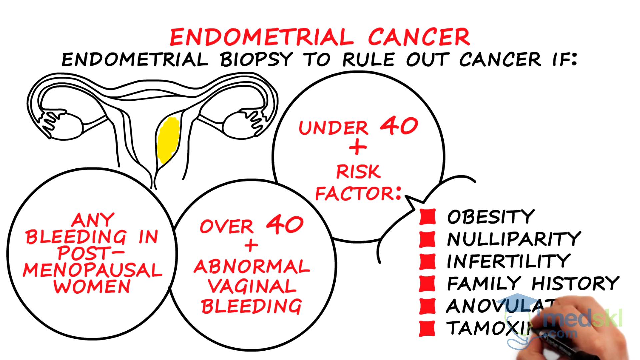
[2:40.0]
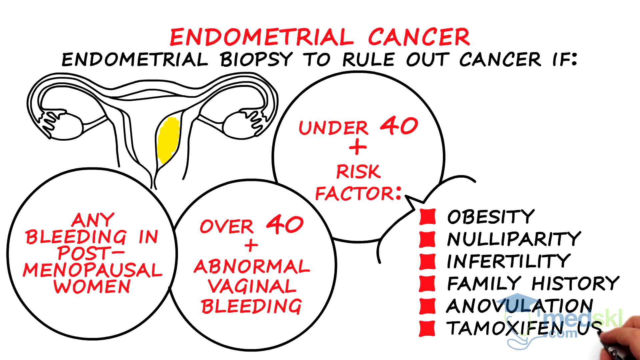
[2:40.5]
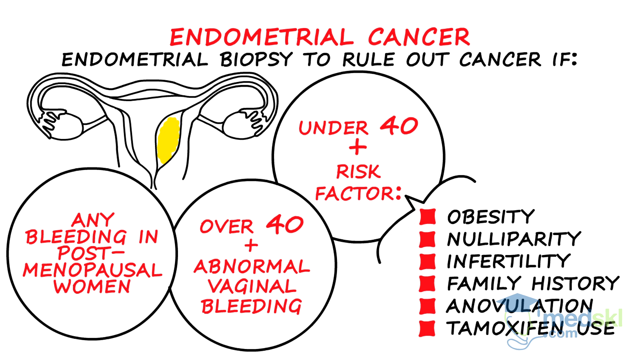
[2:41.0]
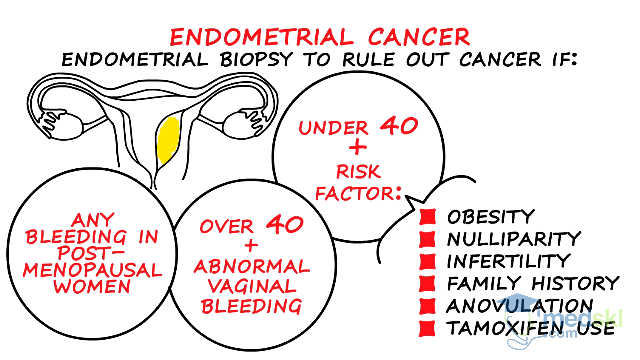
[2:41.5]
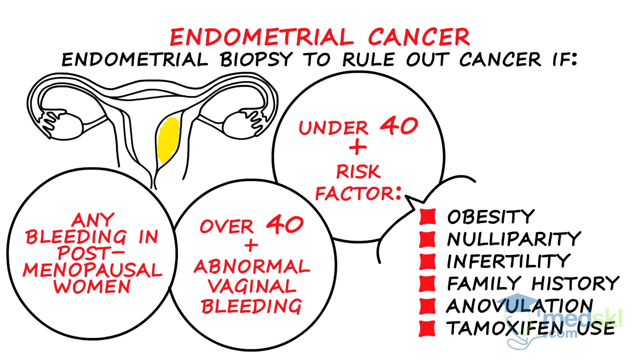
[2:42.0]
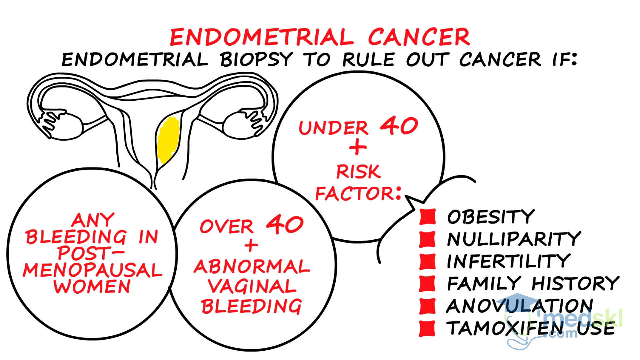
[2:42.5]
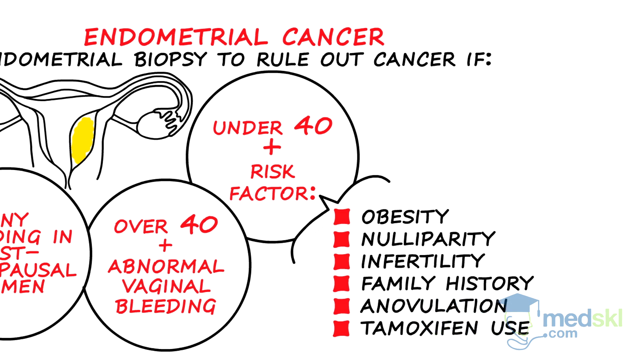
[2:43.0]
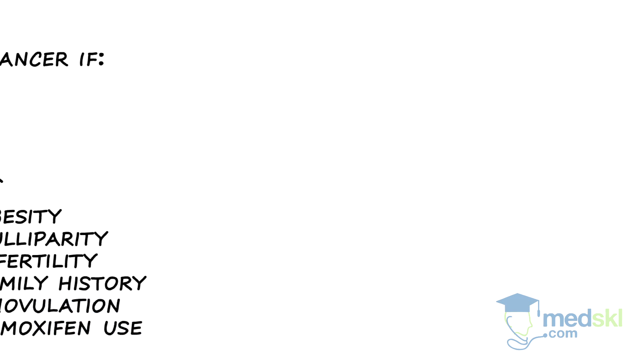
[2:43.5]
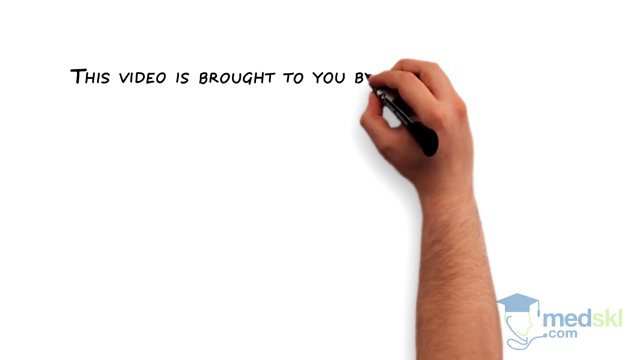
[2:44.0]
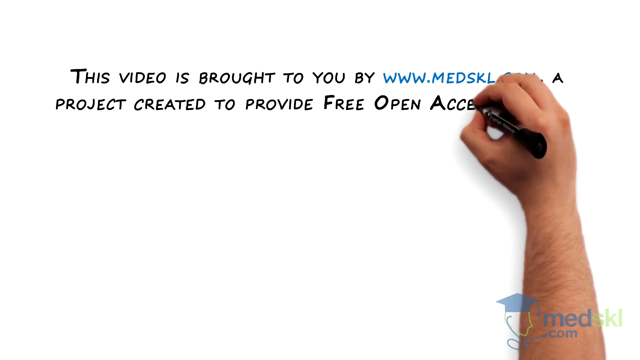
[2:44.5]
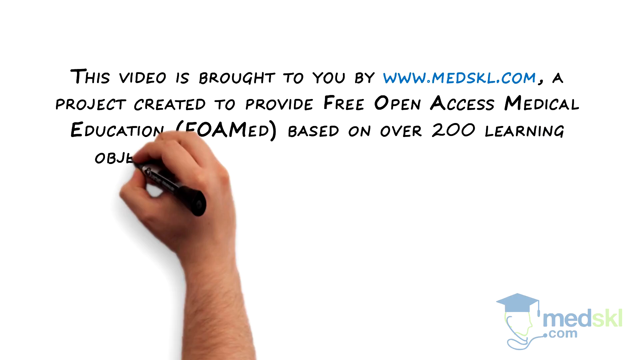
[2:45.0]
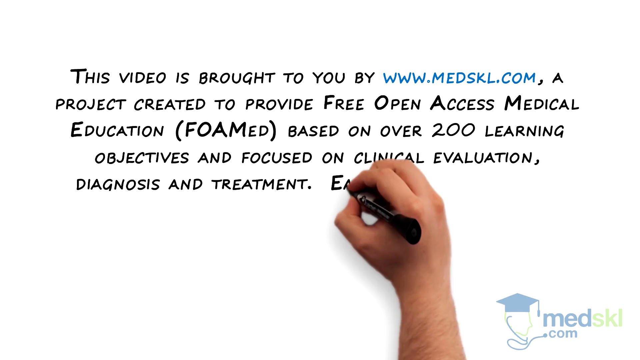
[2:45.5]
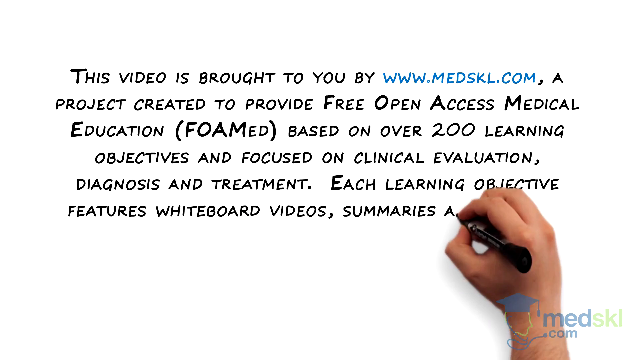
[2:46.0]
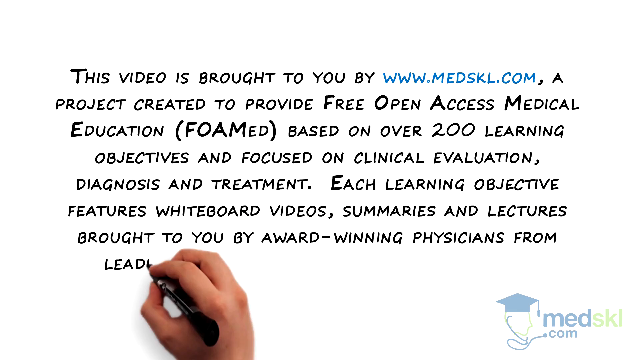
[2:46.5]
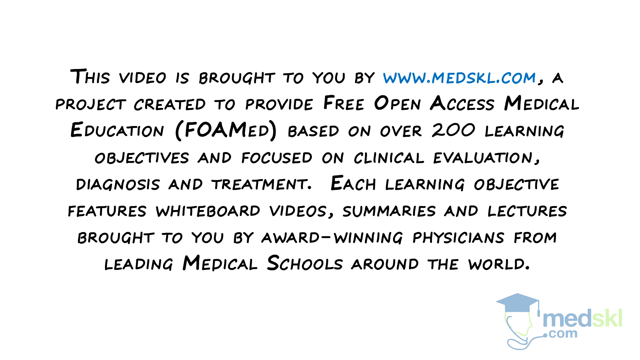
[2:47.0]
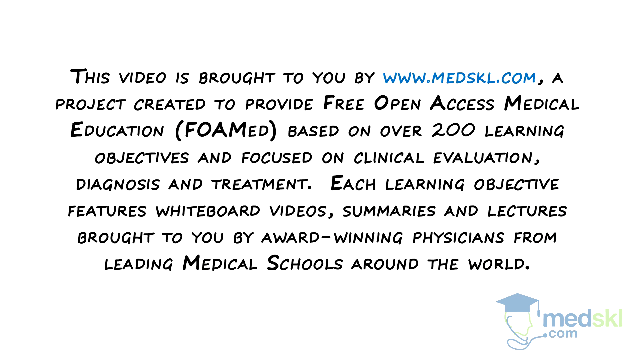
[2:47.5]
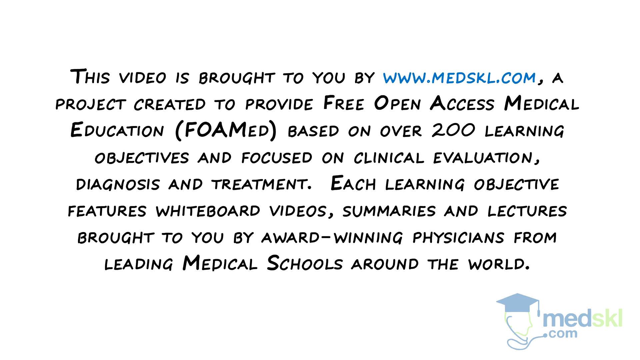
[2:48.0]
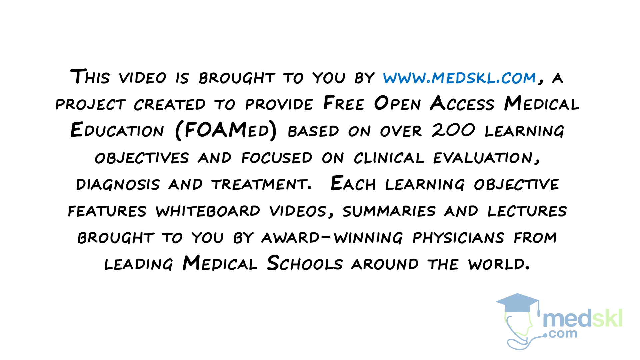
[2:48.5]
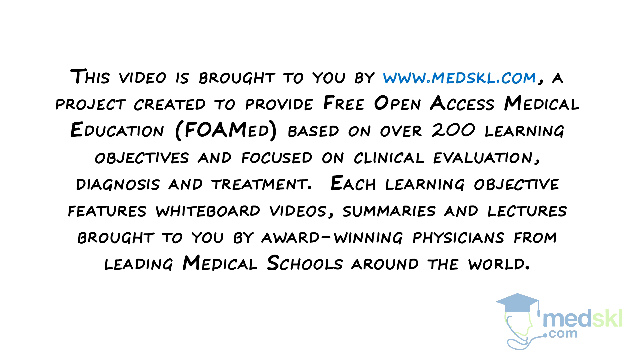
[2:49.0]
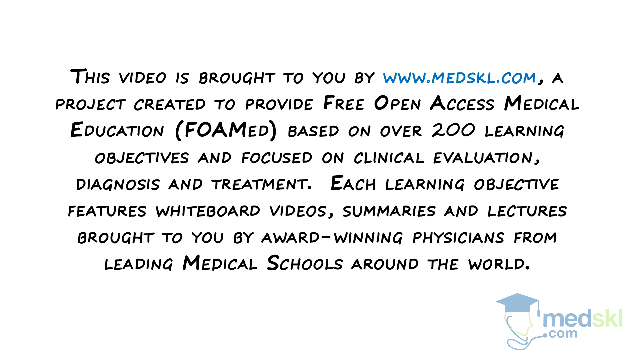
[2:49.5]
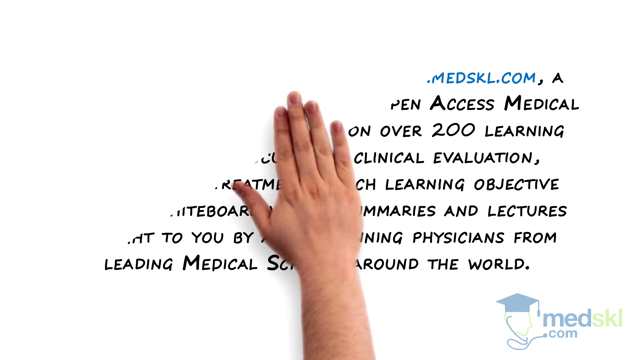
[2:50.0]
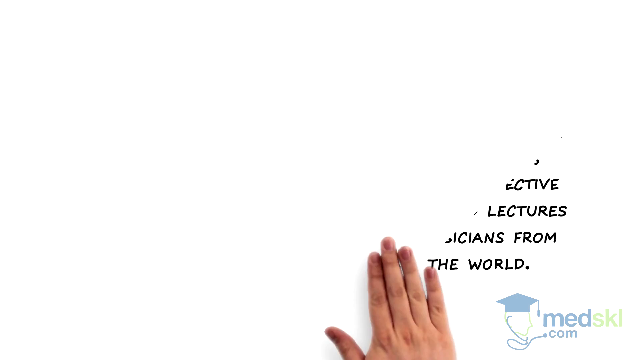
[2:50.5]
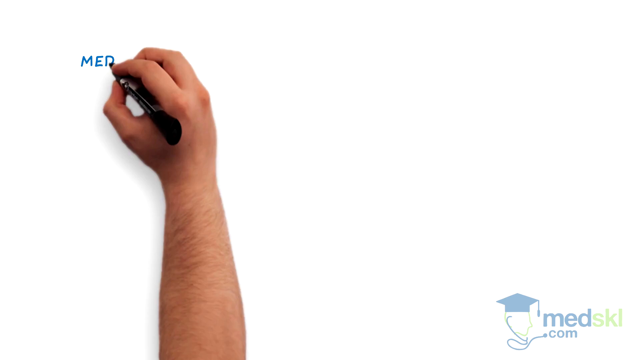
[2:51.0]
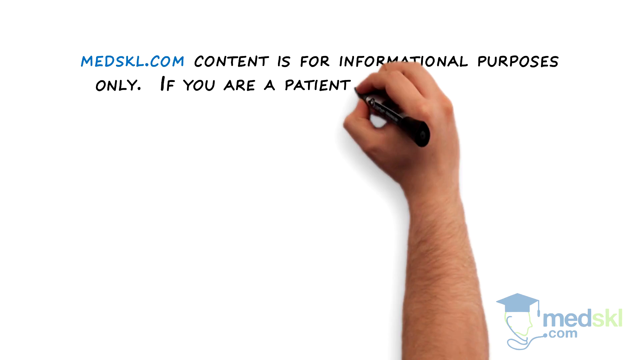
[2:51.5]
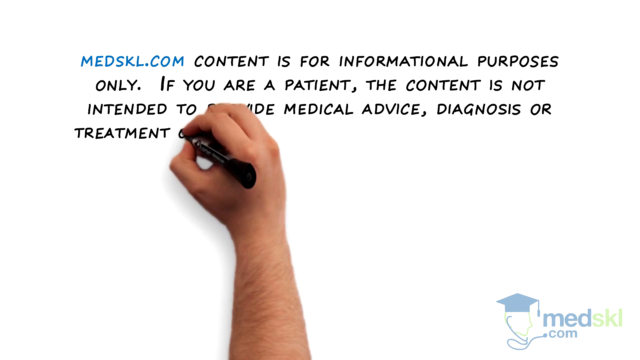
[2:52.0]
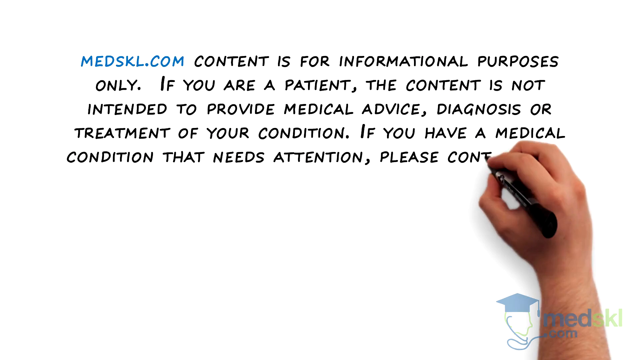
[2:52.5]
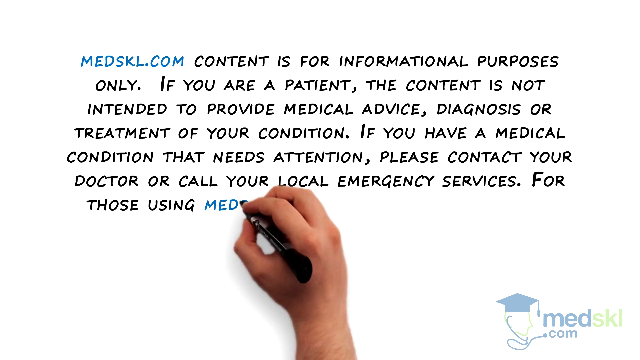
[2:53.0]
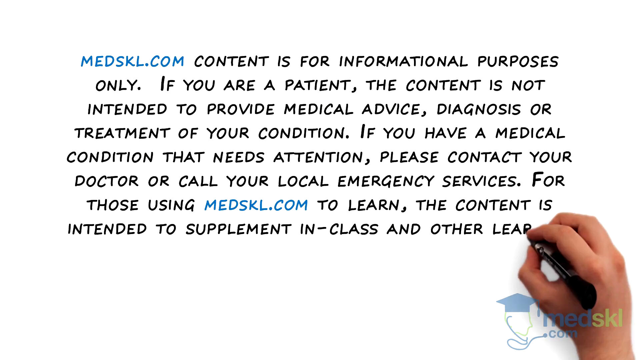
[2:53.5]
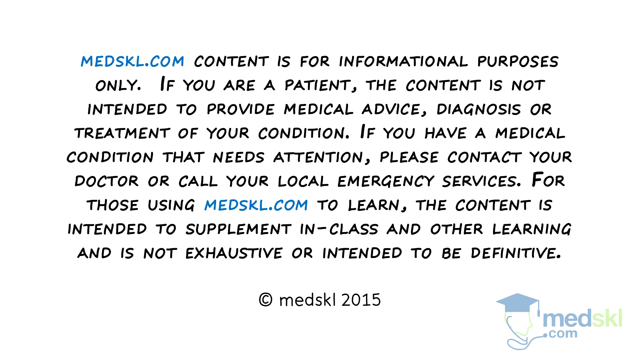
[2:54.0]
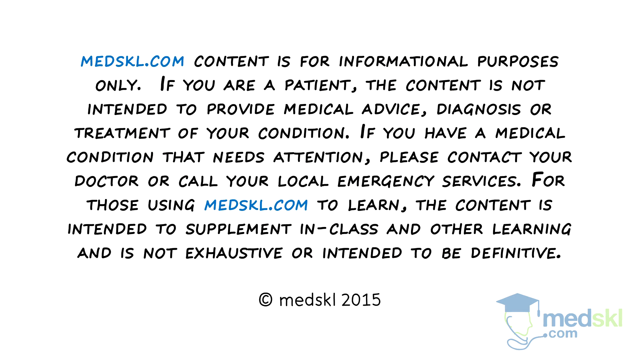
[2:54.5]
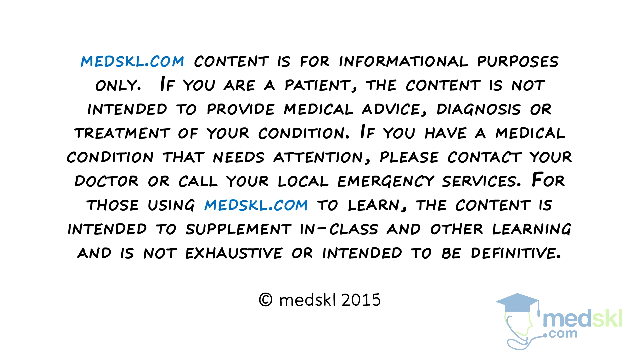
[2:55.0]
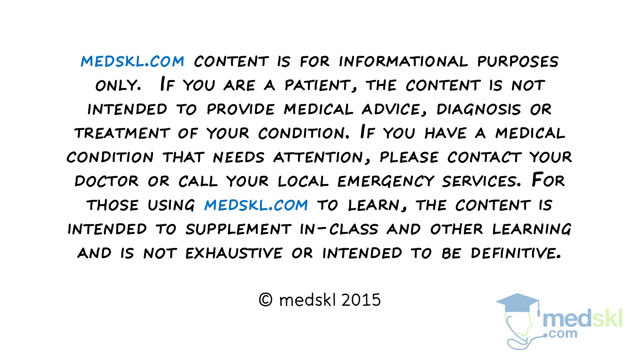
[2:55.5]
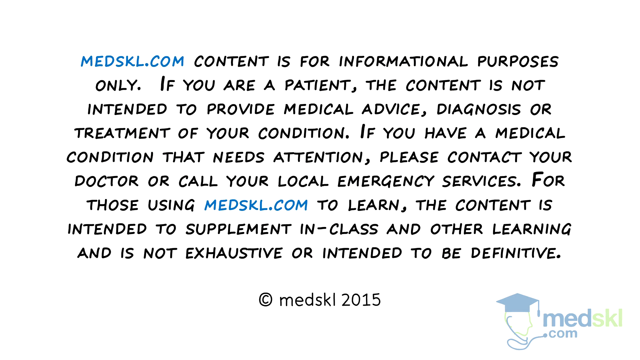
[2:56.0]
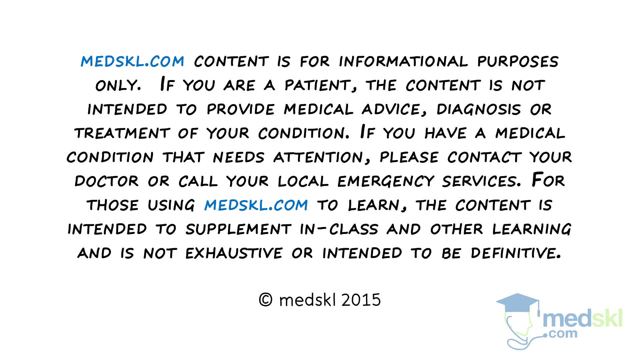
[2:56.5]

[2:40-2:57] The hand writes the final bullet point in the bottom right corner, "Tamoxifen." The scene shifts to the right, and the hand writes a message: "This video is brought to you by www.medskl.com, a project created to provide free, open-access medical education based on over 200 learning objectives and focused on clinical evaluation, diagnosis, and treatment. Each learning objective features whiteboard videos, summaries, and lectures brought to you by award-winning physicians from leading medical schools around the world." The background is white and the text is black, except for the website, which is in blue. The logo of the website and company, MedSkl, is in the bottom right corner. The hand then erases all the words and information and writes a disclaimer.